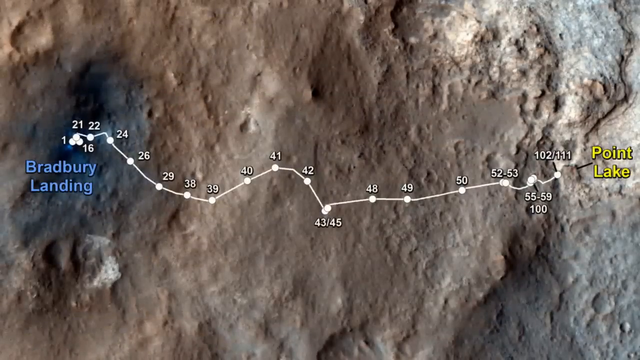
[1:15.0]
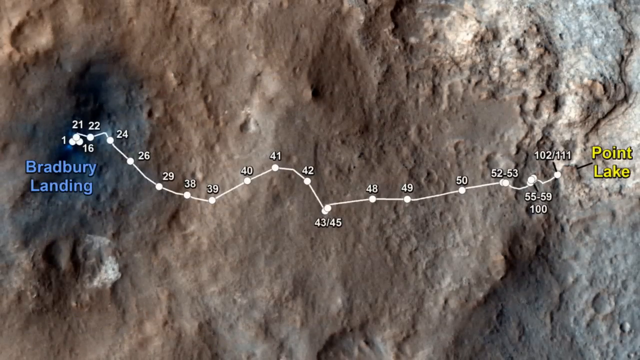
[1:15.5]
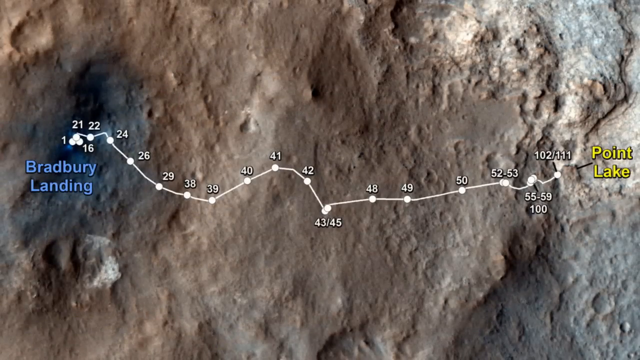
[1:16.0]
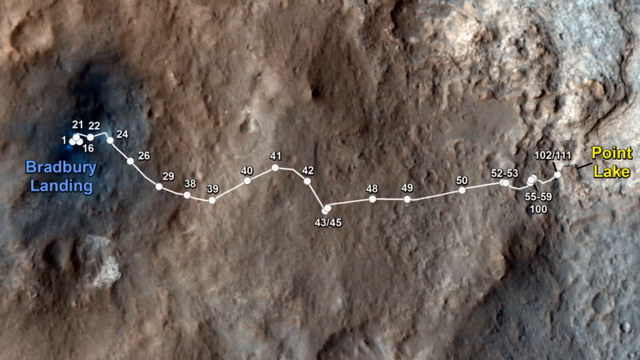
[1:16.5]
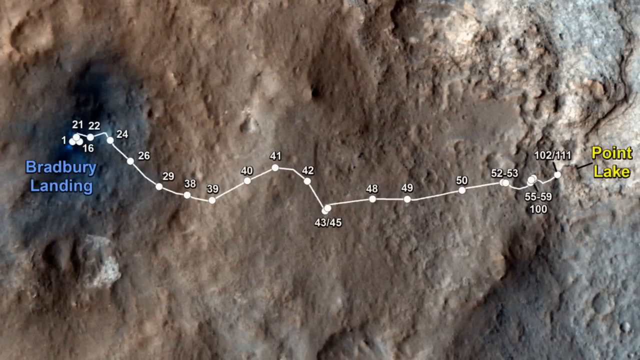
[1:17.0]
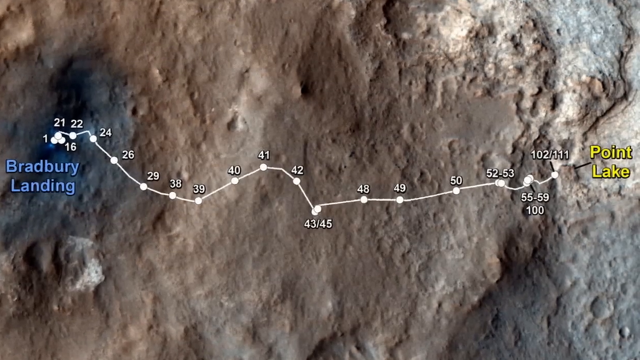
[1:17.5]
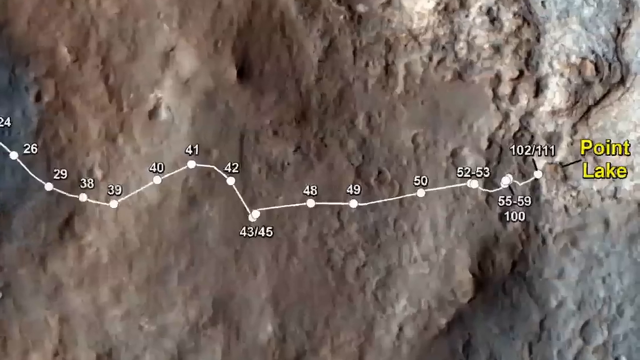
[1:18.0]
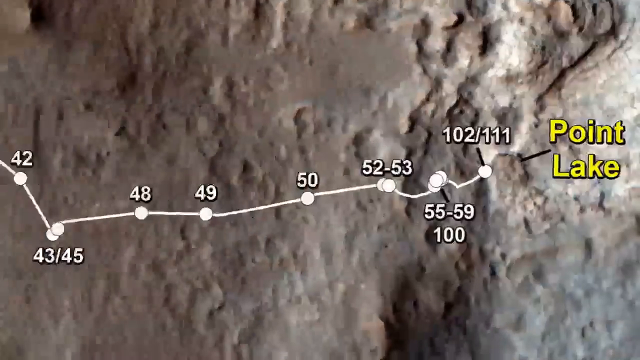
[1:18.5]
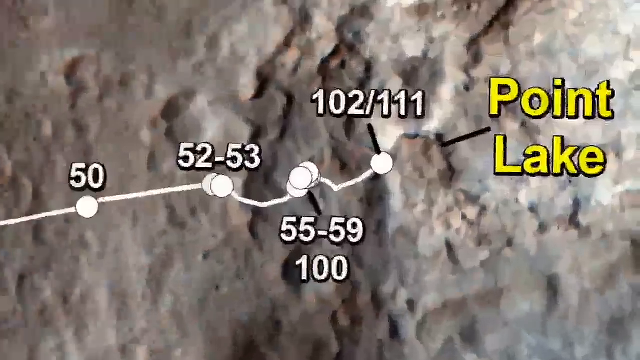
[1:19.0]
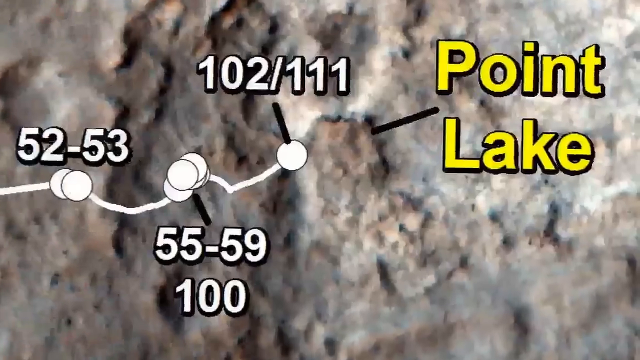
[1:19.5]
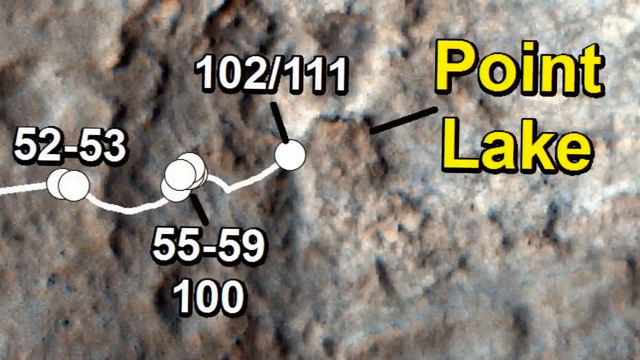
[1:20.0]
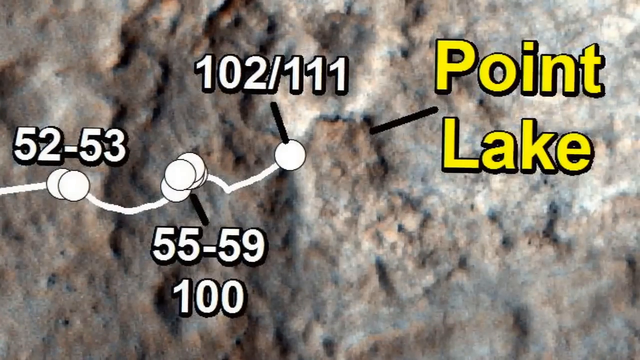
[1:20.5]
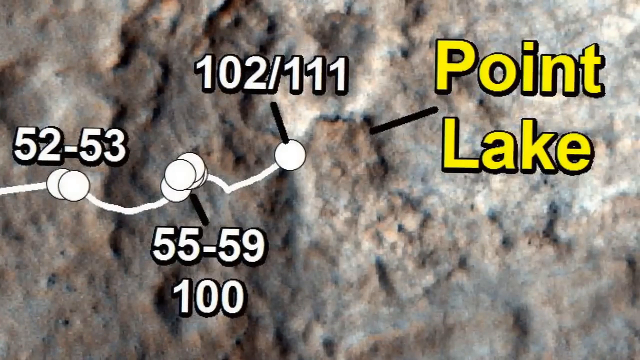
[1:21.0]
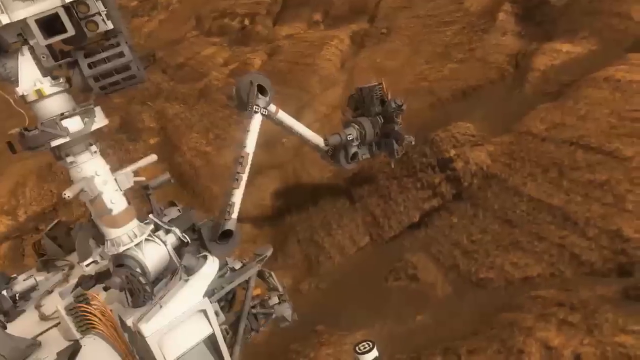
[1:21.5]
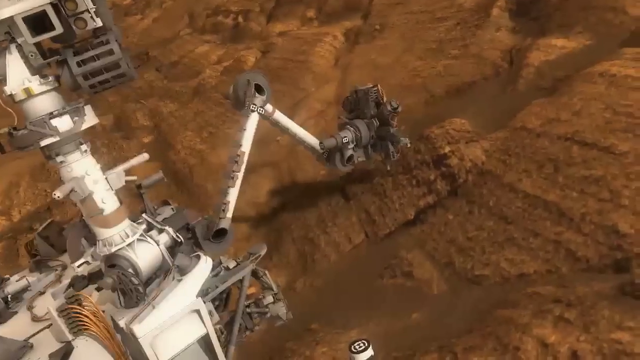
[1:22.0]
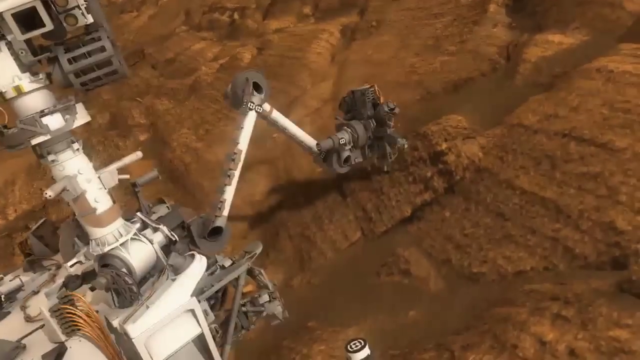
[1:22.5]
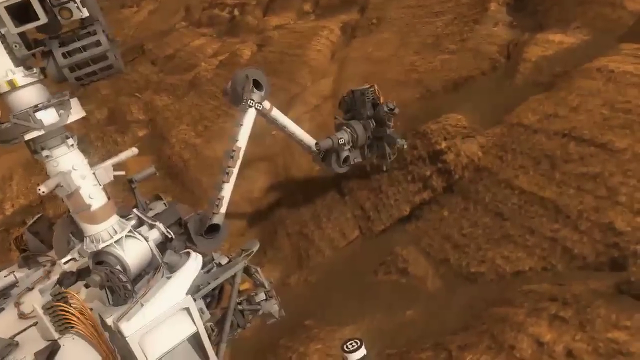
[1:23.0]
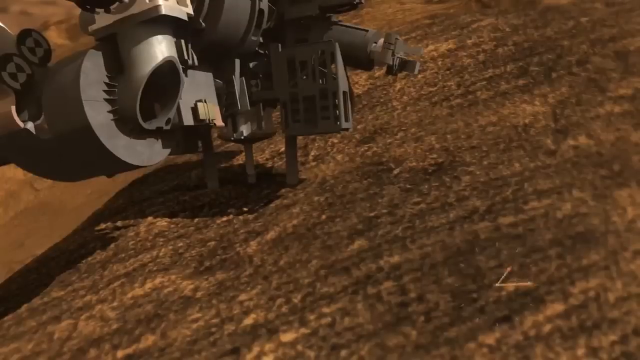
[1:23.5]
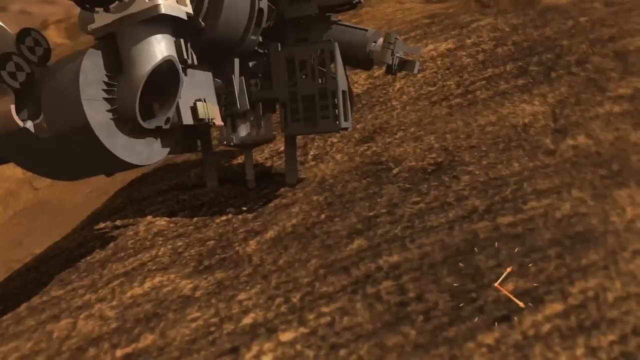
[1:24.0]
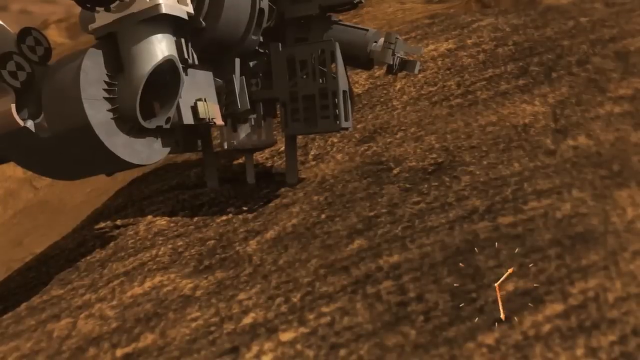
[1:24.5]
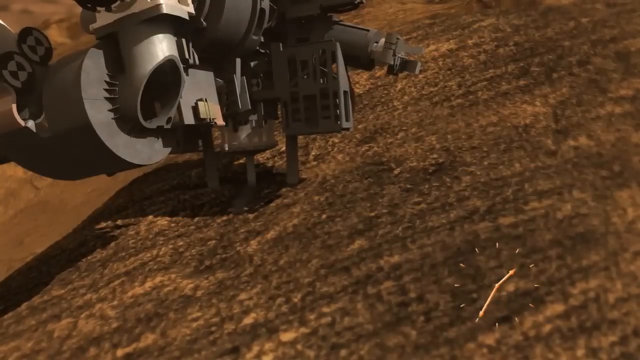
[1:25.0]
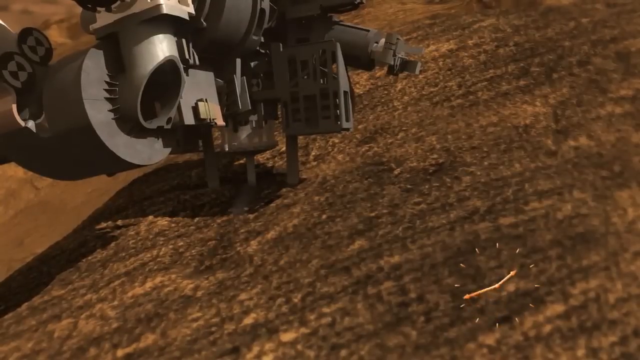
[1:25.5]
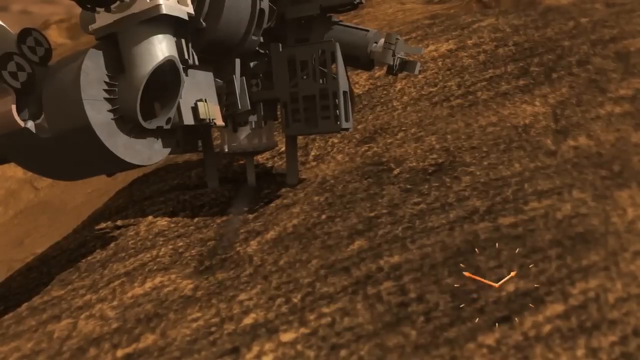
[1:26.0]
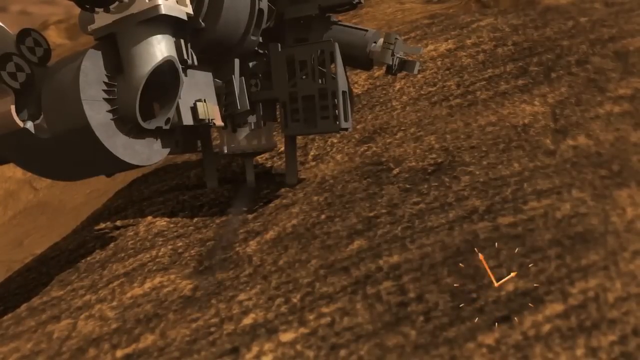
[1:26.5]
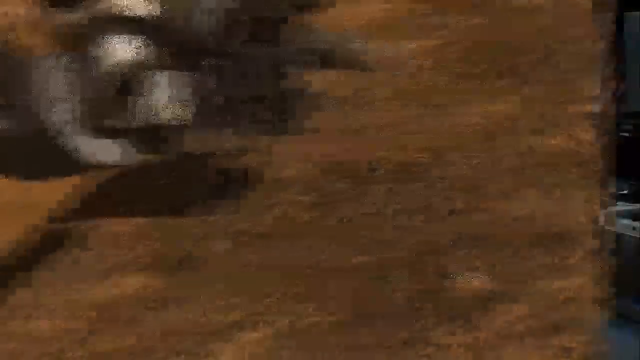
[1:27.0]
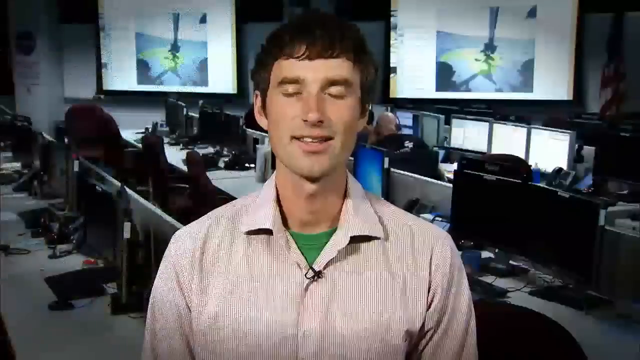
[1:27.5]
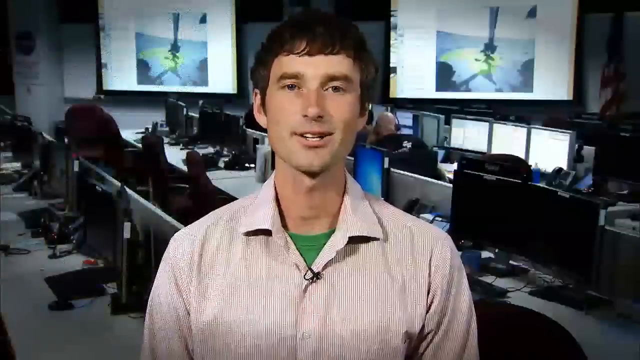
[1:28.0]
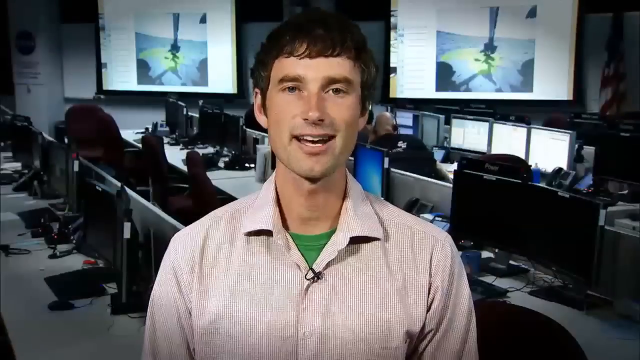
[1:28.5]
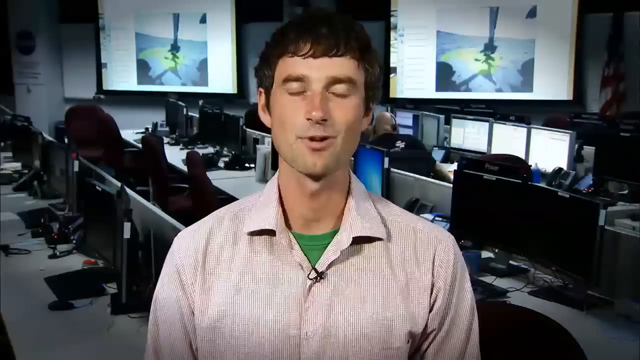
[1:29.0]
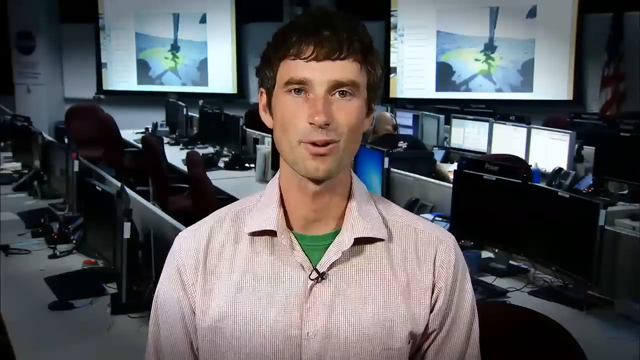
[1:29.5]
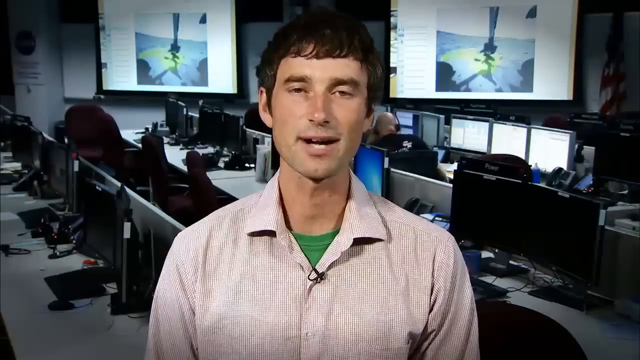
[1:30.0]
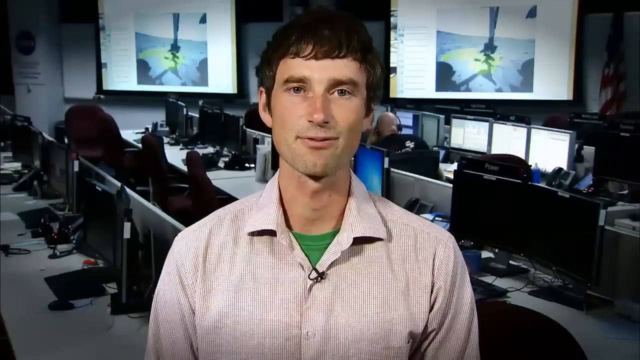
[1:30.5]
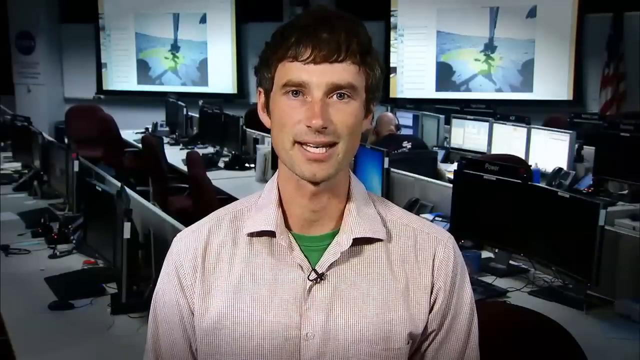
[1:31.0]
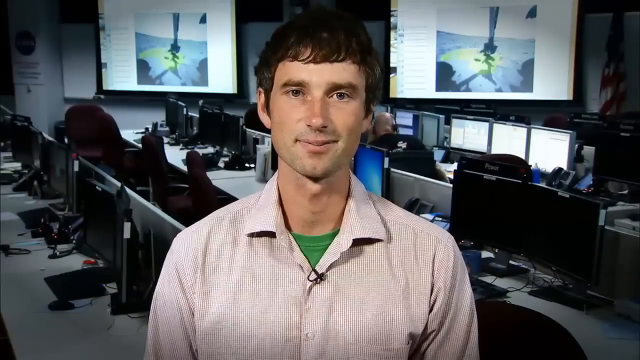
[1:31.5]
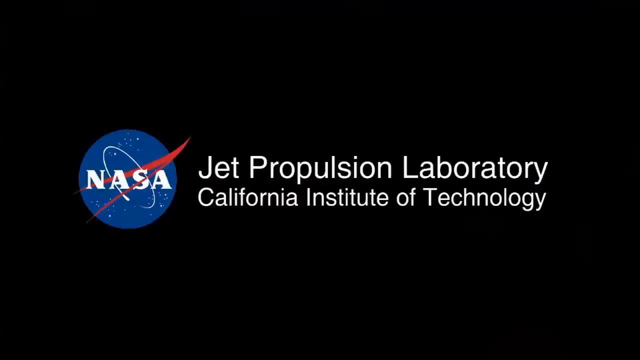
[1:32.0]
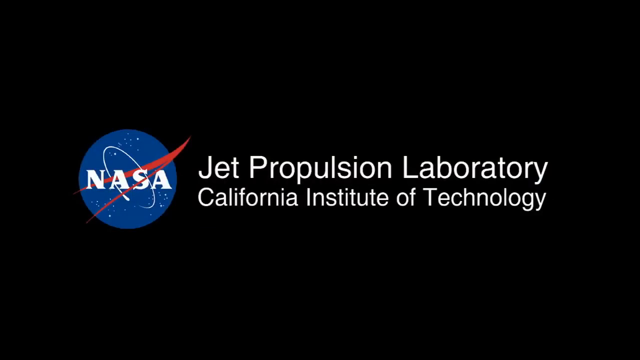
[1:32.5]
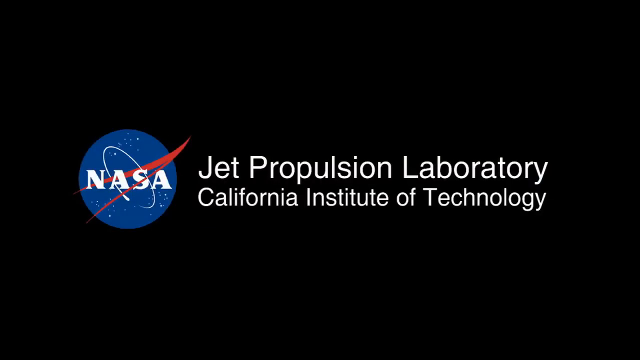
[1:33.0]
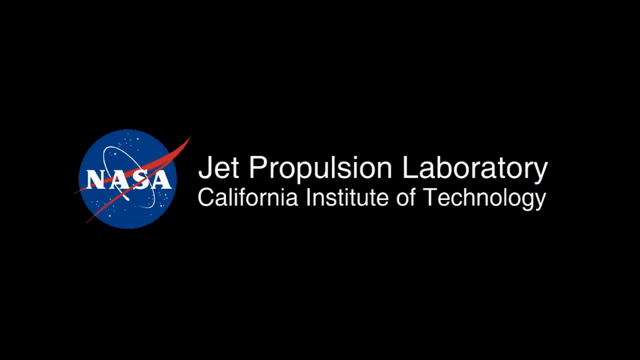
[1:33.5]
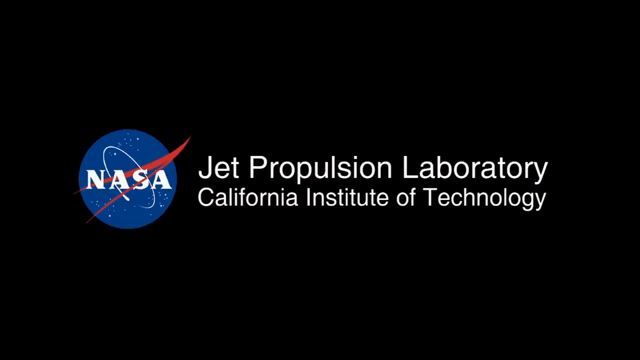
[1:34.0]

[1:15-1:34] A map shows different locations on Mars, starting at Bradbury Landing and ending at Point Lake, with dots at different positions and numbers, seemingly places the rover has been to or taken images at. There are probably about 20 or 30 different spots with dots, and some have many dots layered on top of each other. A rover then slowly inserts something into the surface, apparently taking some kind of sample. Finally a person talks to the camera, concluding the video, with "Jet Propulsion Laboratory, California Institute of Technology" and the Jet Propulsion Lab logo at the end.